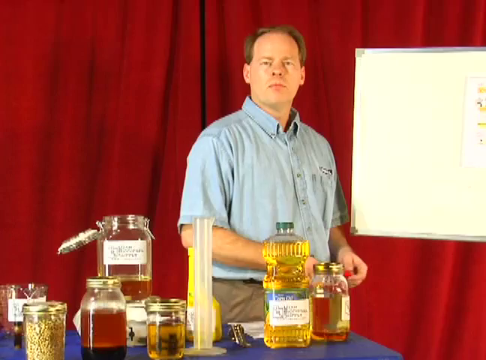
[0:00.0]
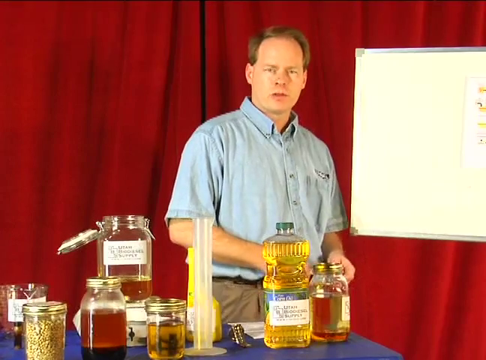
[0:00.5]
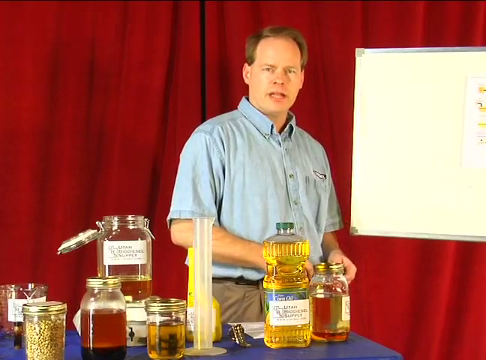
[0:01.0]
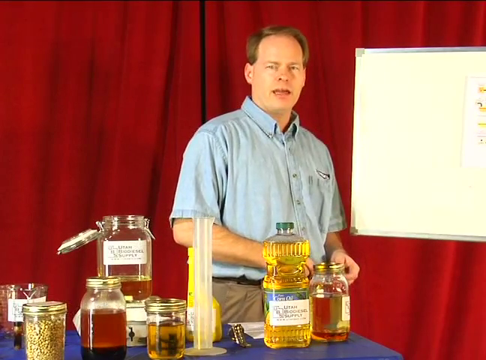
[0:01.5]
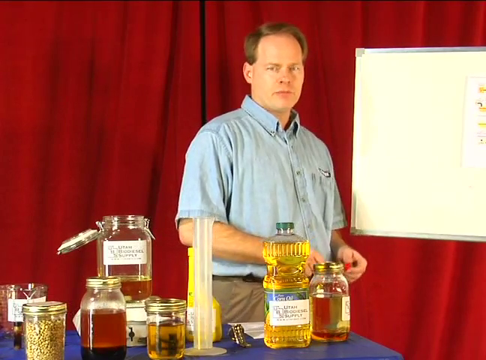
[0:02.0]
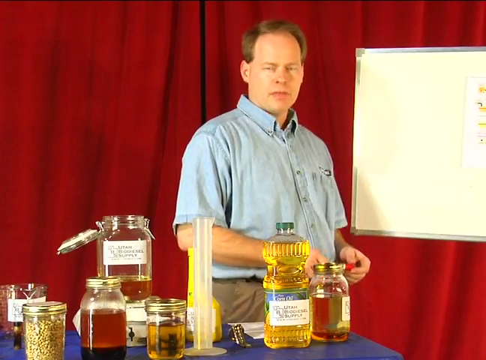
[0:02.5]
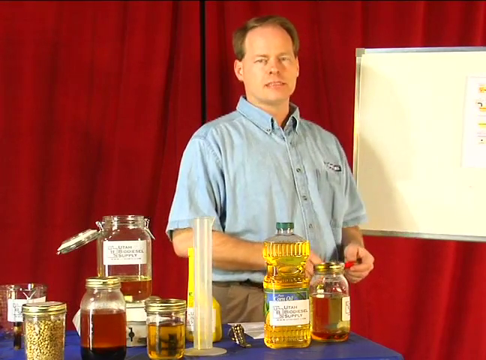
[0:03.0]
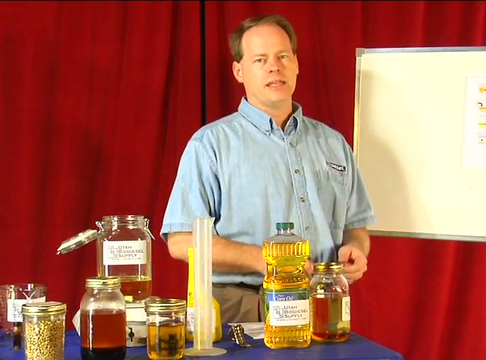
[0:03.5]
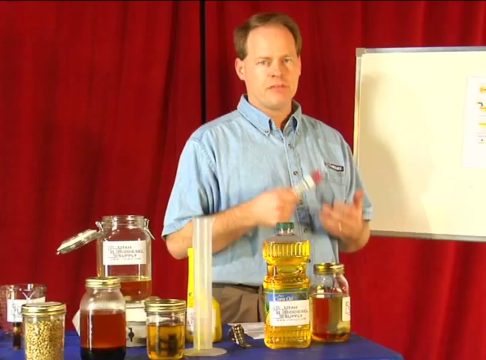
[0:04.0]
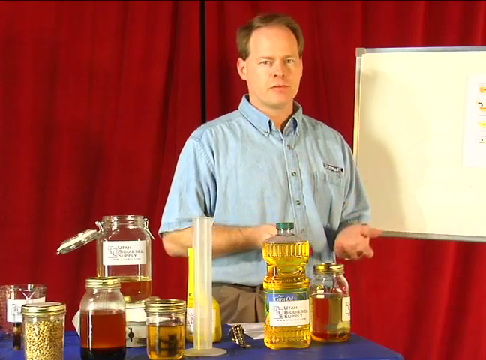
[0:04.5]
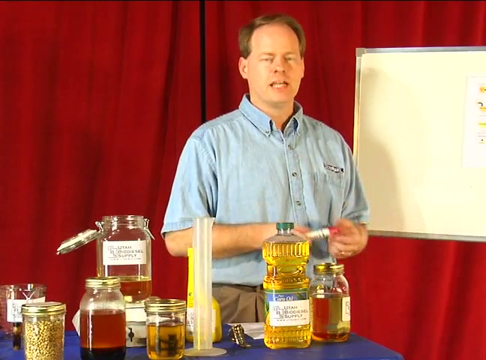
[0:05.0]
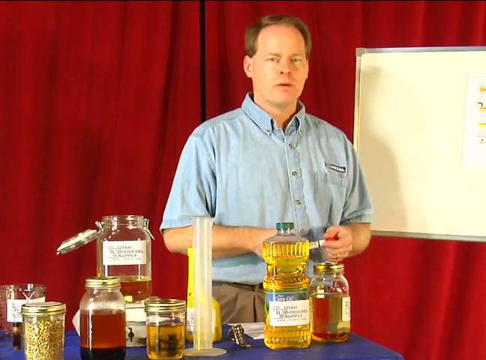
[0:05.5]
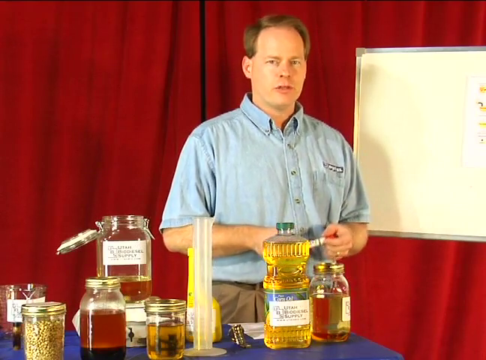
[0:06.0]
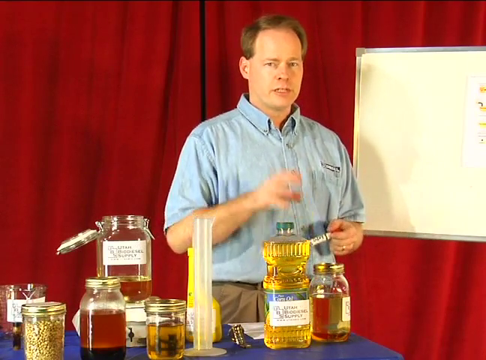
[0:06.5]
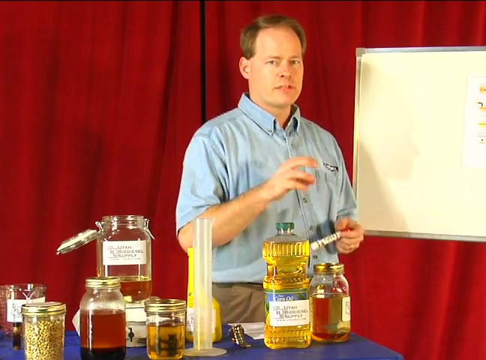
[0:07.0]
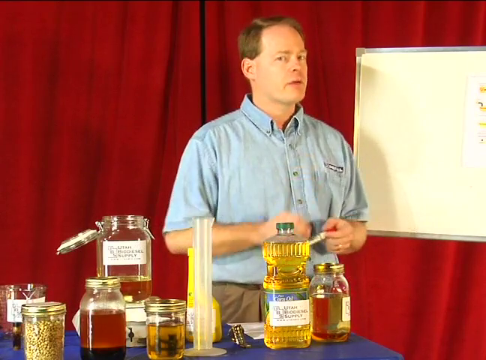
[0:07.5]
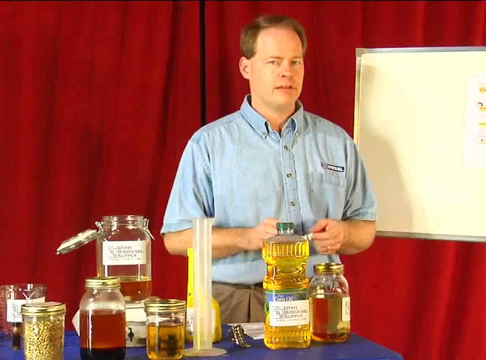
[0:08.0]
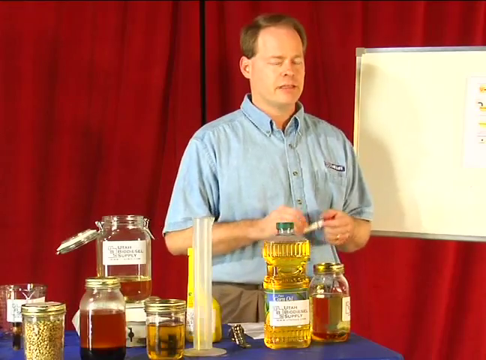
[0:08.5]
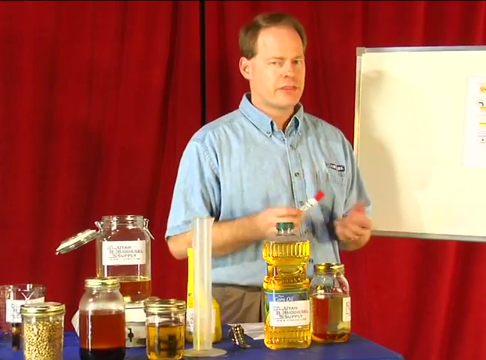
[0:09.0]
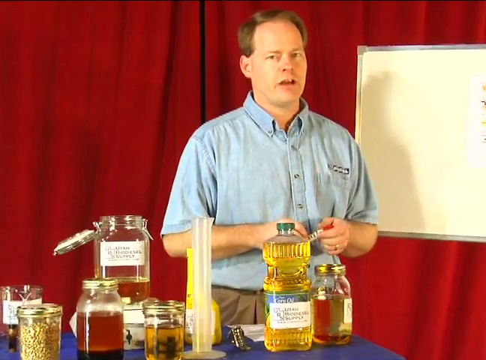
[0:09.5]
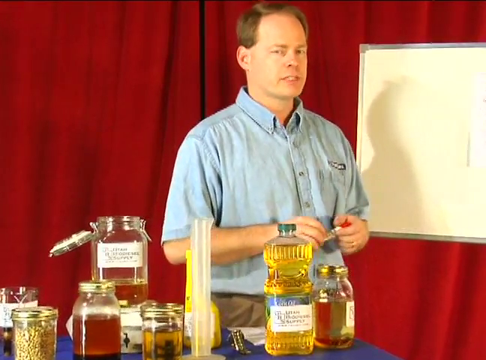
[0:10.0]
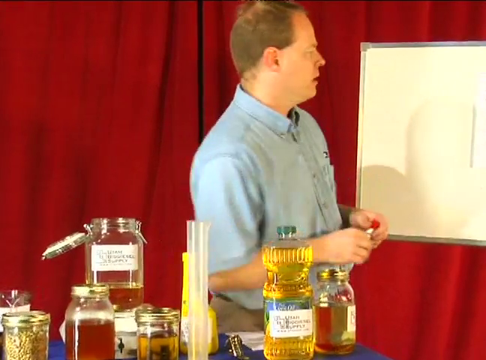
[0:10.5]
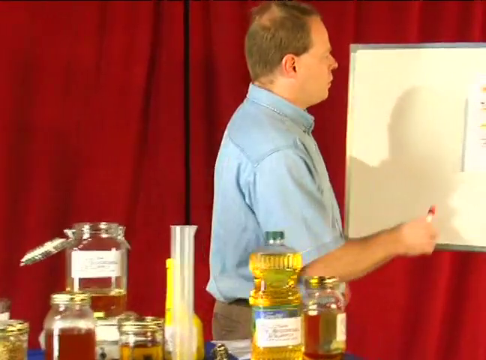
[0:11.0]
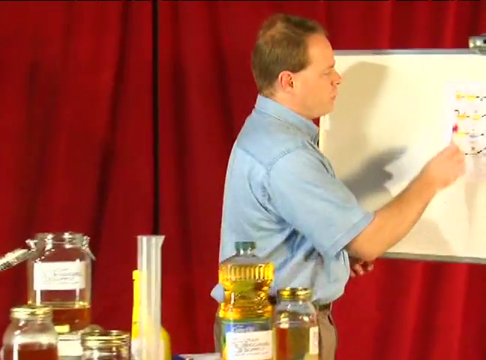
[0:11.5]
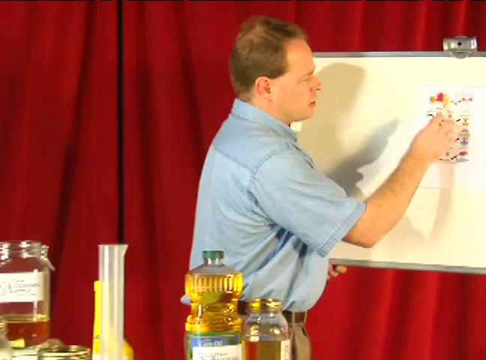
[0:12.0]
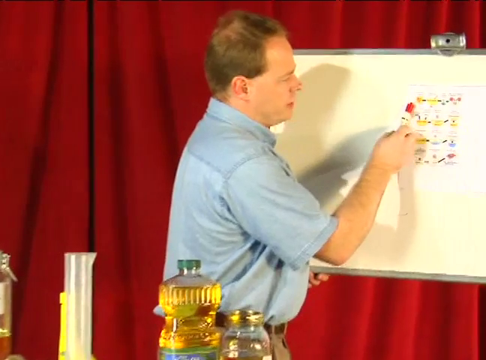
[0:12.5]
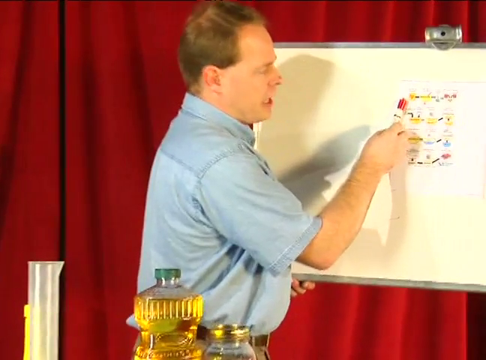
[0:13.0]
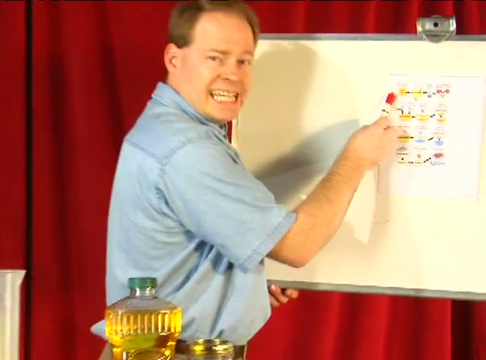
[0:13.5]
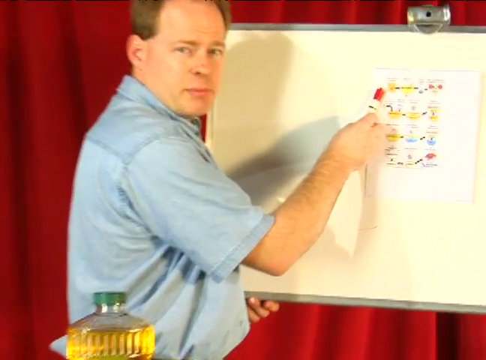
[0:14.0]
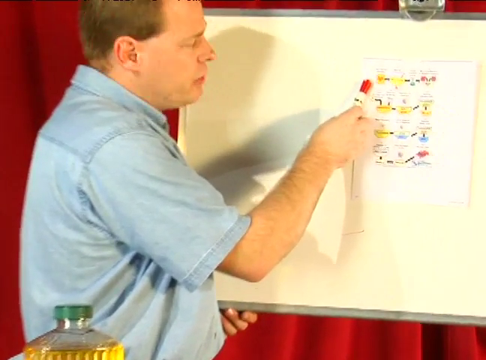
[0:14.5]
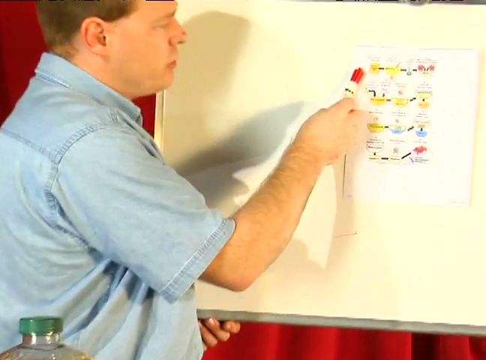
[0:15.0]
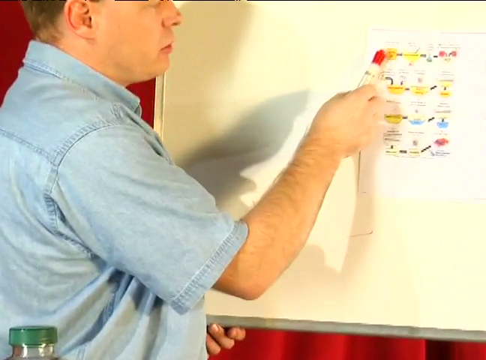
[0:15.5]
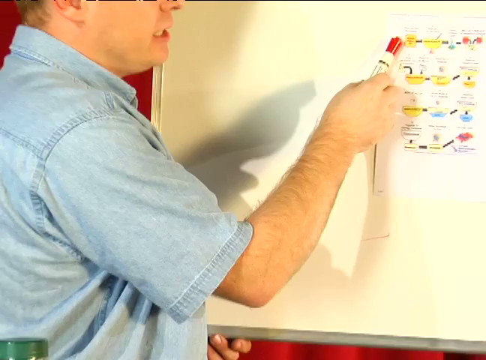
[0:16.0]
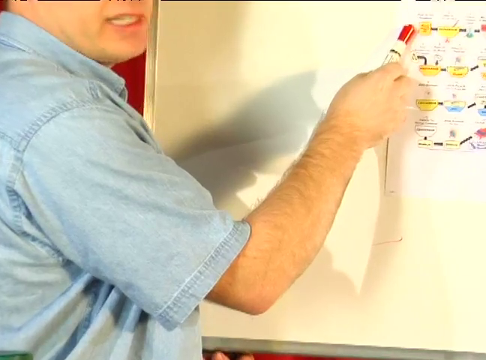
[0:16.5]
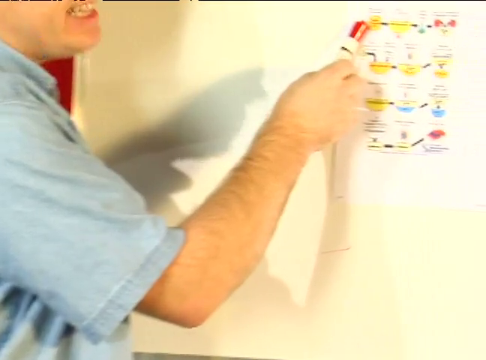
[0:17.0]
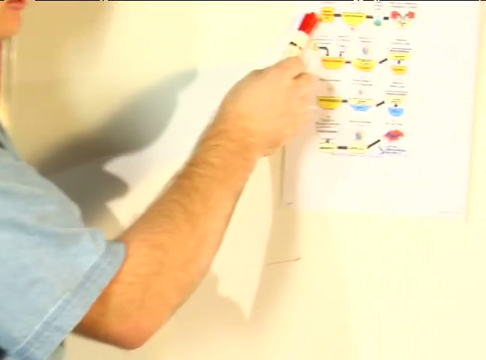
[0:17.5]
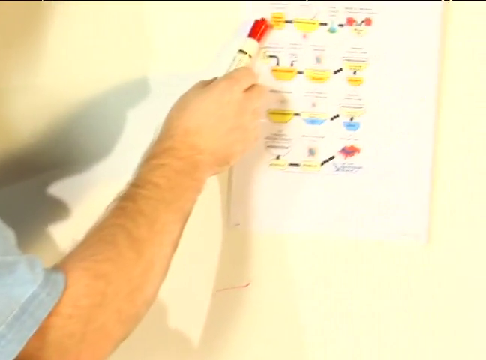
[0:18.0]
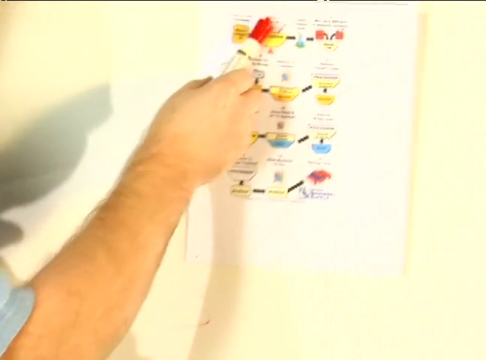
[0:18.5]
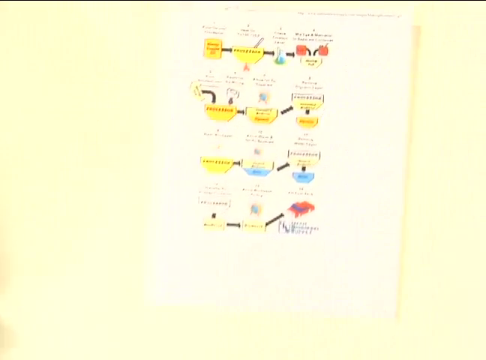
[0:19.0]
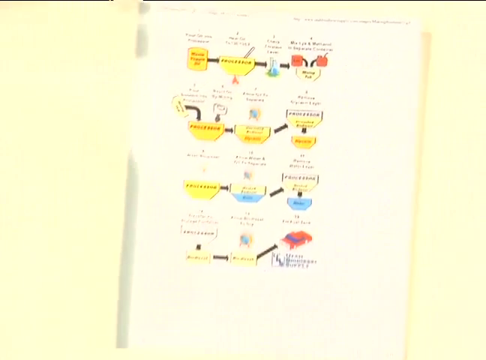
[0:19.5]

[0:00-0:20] What appears to be a science experiment is underway. A man in a short-sleeved blue shirt stands in front of a red curtain, and next to him is a whiteboard with some information written on it. In front of him are what look to be various substances and jars, along with what appears to be a Bunsen burner and other science equipment. He points at a note attached to the board he is looking at, and the note seems to have different illustrations on it. The table holds what looks to be many different substances and kinds of equipment; many of the items appear to be in mason jars with that style of lid. There is also a bottle of cooking oil or vegetable oil on the table.